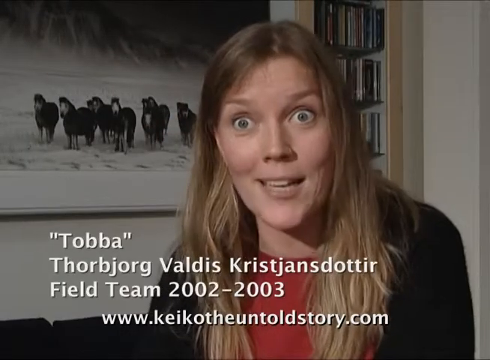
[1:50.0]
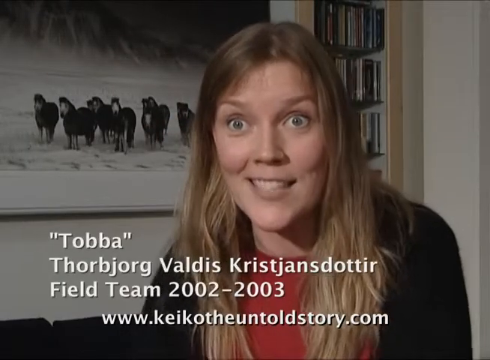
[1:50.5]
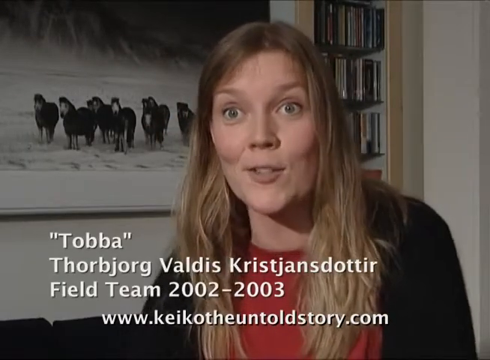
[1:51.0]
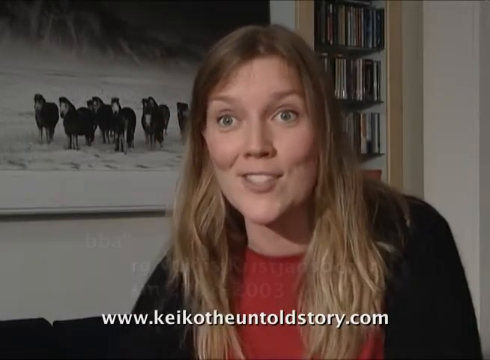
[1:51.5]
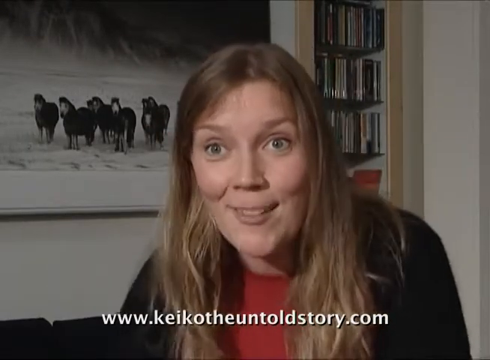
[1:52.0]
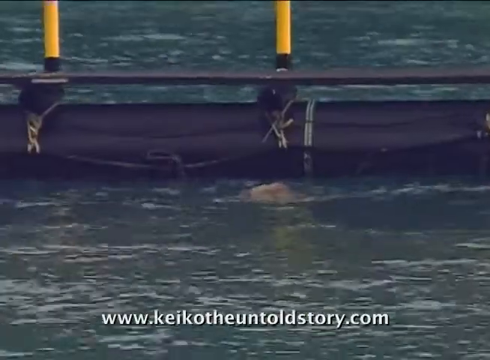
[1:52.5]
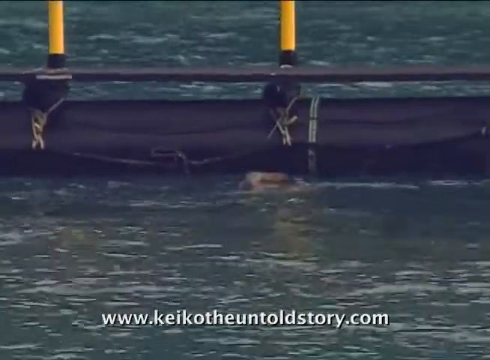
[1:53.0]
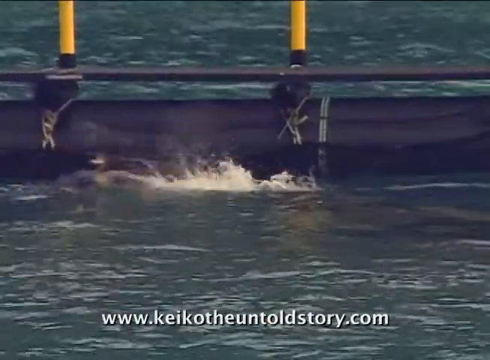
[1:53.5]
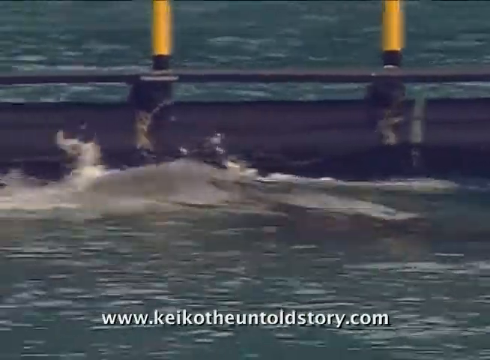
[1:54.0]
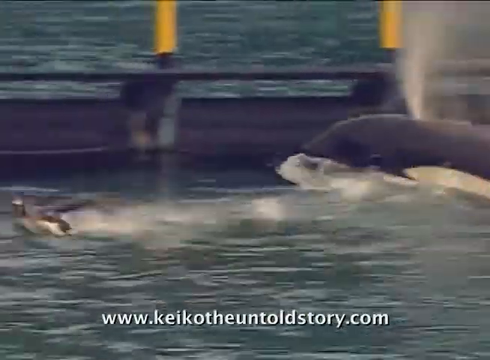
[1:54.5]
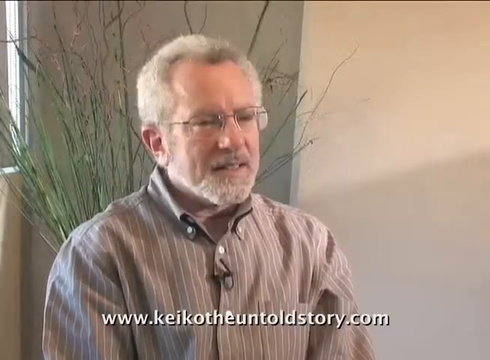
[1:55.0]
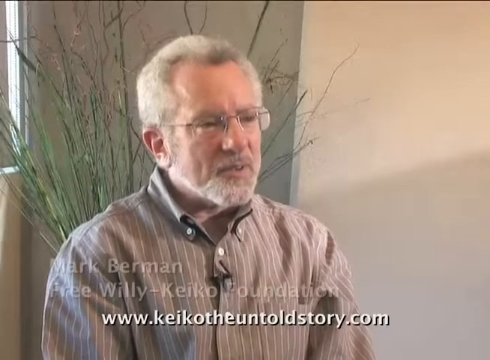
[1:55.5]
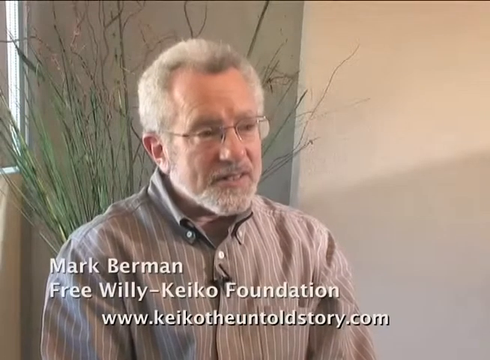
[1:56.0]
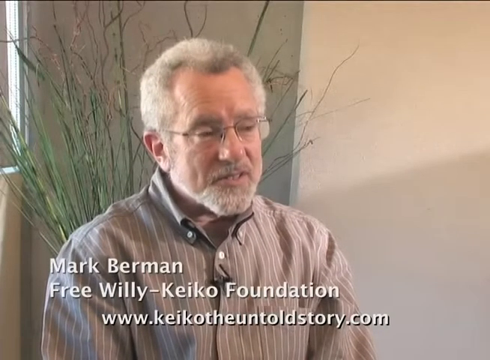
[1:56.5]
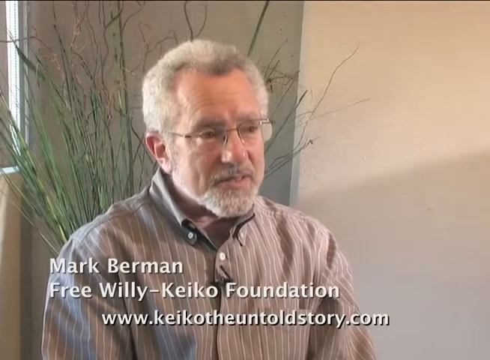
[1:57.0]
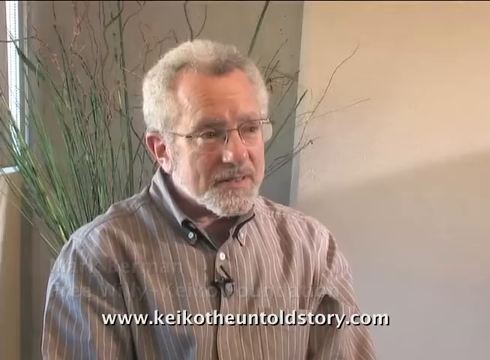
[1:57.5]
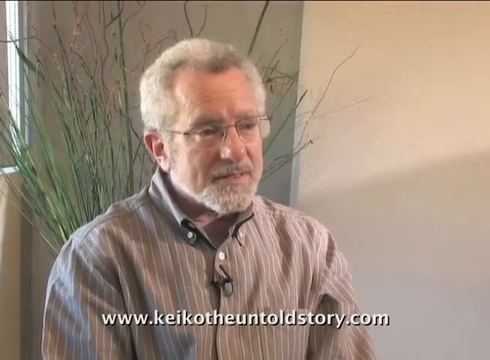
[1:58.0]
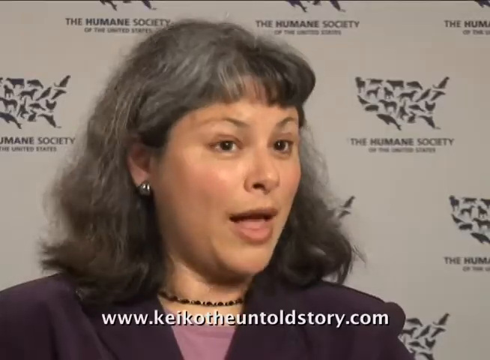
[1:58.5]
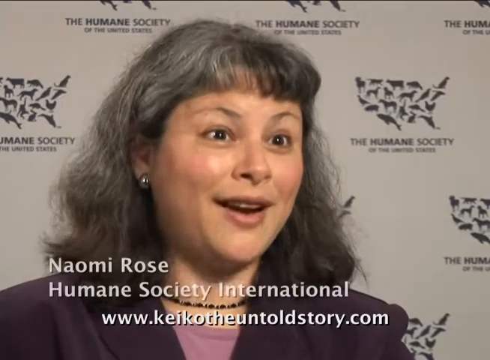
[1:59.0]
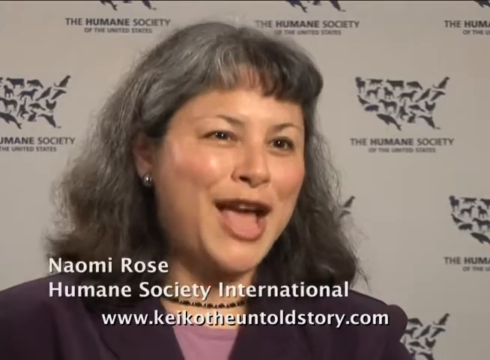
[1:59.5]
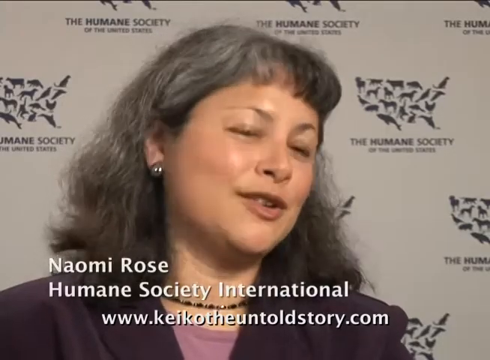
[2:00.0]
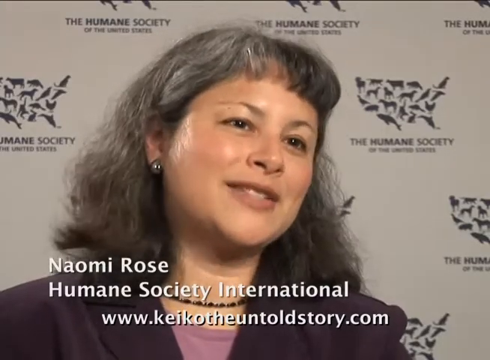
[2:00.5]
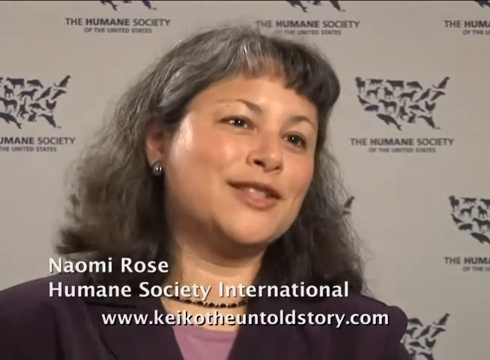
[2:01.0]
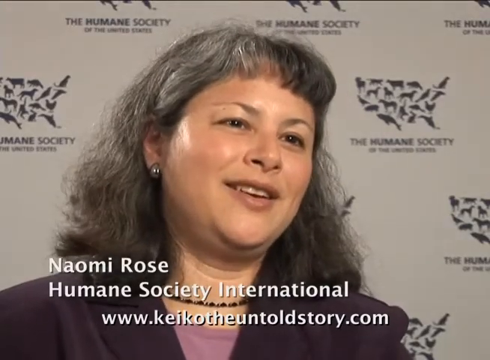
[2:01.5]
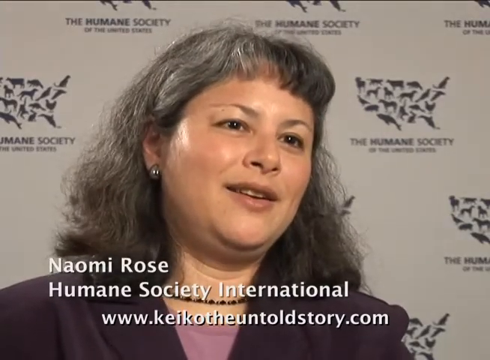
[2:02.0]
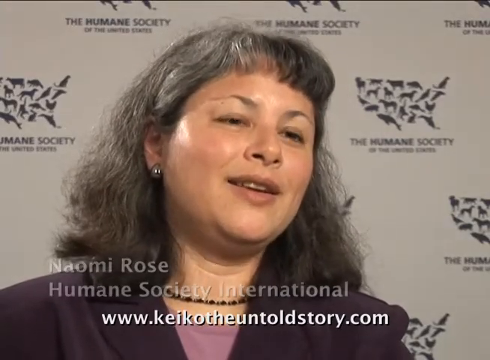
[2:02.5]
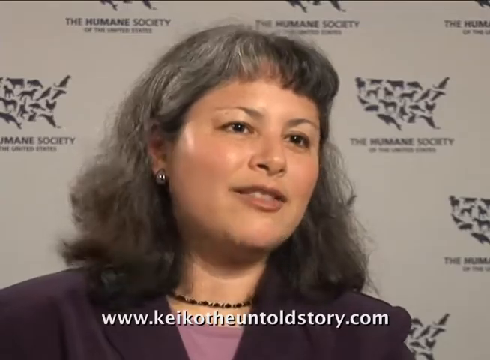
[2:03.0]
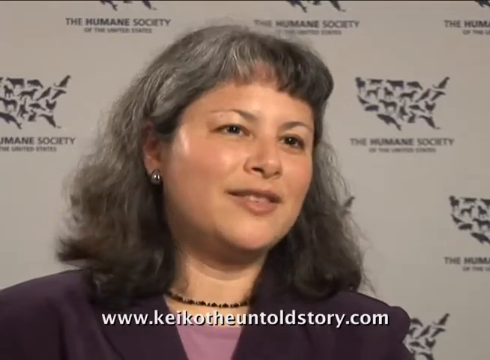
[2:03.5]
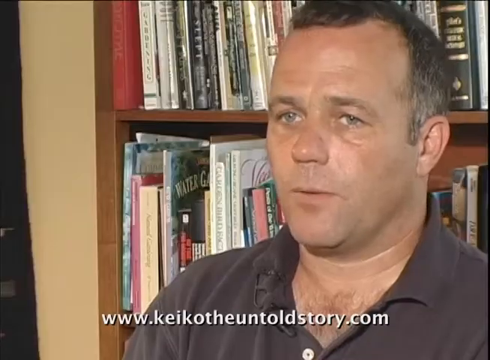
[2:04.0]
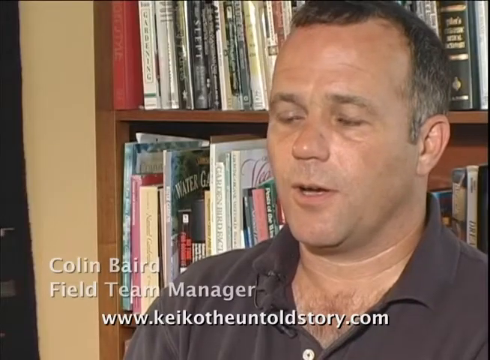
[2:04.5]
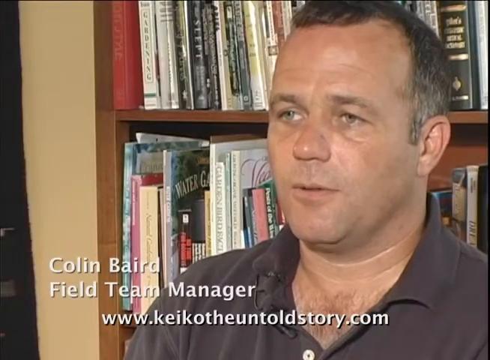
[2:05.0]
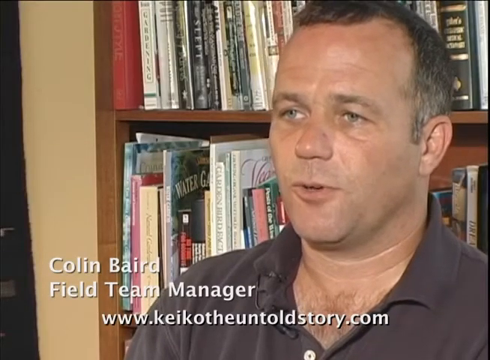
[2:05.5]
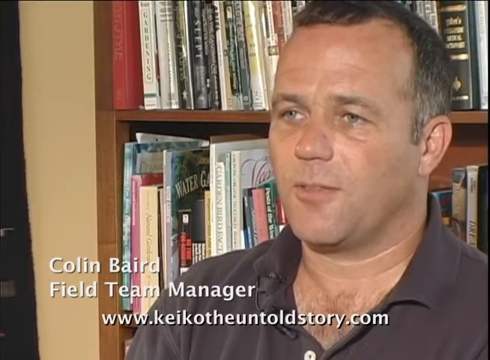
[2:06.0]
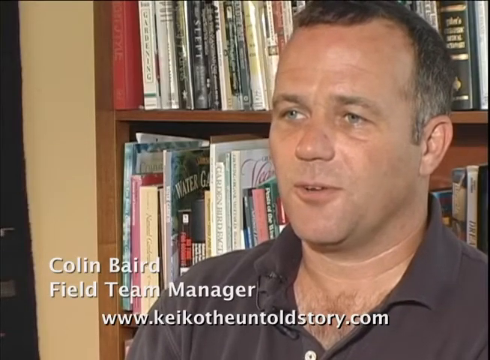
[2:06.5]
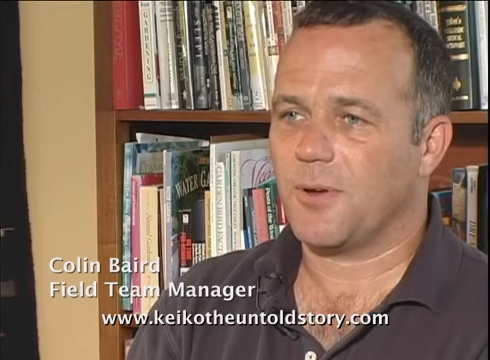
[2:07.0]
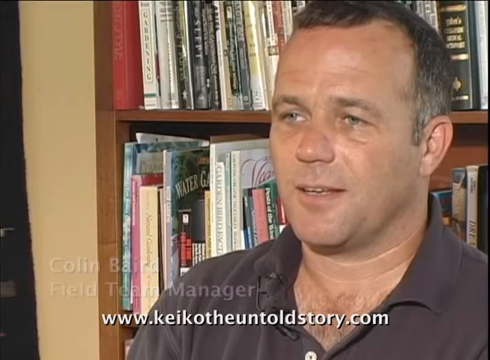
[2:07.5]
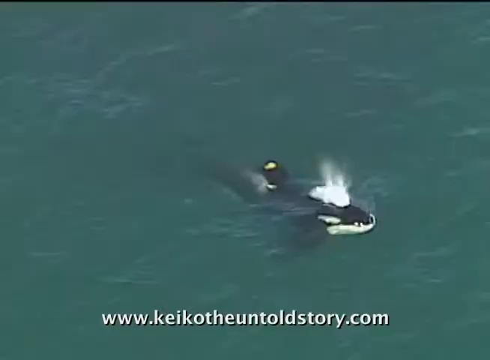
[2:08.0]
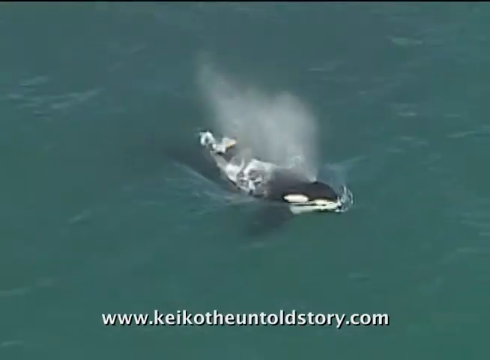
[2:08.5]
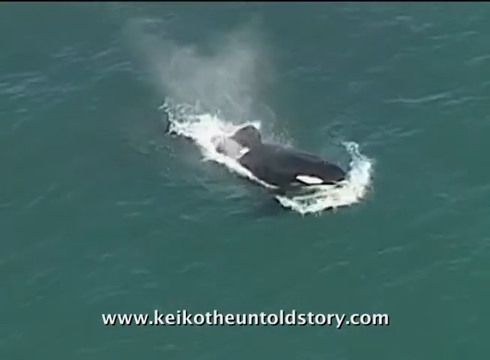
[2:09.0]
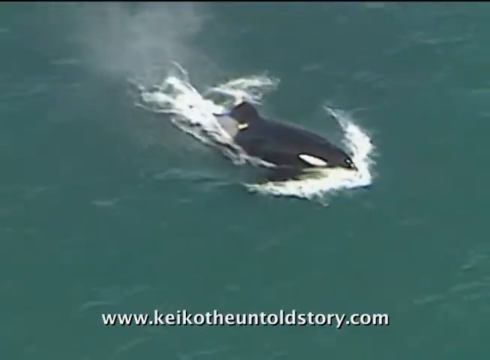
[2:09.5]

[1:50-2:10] The woman with long blonde hair, a black sweater and a red shirt is in front of a framed picture of horses standing in either snow or sand with a mountain behind them, with a shelf of what looks like CDs to her right. White lettering at the bottom reads "'Tobba' ThorneBjorg Valdis Kristjansdottir, Field Team 2002-2003, www.keikotheuntoldstory.com." She has green eyes, and her eyes are wide as she talks, very animated, moving her head backward and forward toward the camera. The image switches to bluish-gray-green water, with the edge of the floating pen and yellow pylons at the top visible. A bird in the water quickly flies away as an orca breaks the water underneath it. The shot switches to a man with short gray hair, a short gray beard and glasses, wearing a gray and white striped dress shirt. Behind him is ornamental grass; he is inside an office with gray and beige walls, and light comes from the left side of the screen, possibly from a window. White lettering at the bottom says "Mark Berman, Free Willy Keiko Foundation, www.keikotheuntoldstory.com." He talks, opening and closing his eyes. Next is a woman with shoulder-length gray and black hair with bangs, wearing a purple jacket, a necklace and silver earrings. Behind her, a wall has a depiction of the United States made of different animal shapes, with "the Humane Society" under it. She talks passionately, tilting her head to the left, and white letters at the bottom read "Naomi Rose, Humane Society International, www.keikotheuntoldstory.com." She keeps talking until the shot switches to a man with short gray and brown hair wearing what looks like a gray polo shirt. Behind him is a bookshelf with many books, a sliver of yellow wall, and what looks like a black door to the left. White lettering at the bottom reads "Colin Baird, Field Team Manager, www.keikotheuntoldstory.com." He talks, moving his head slightly forward and back.